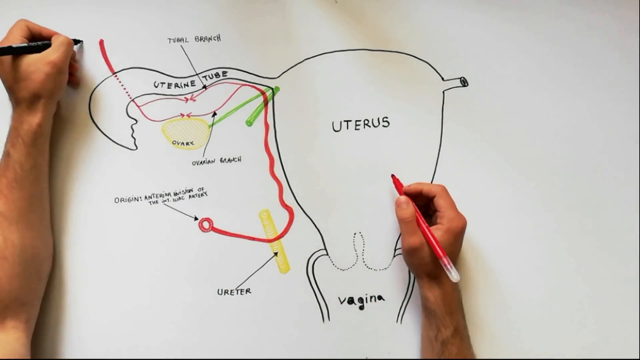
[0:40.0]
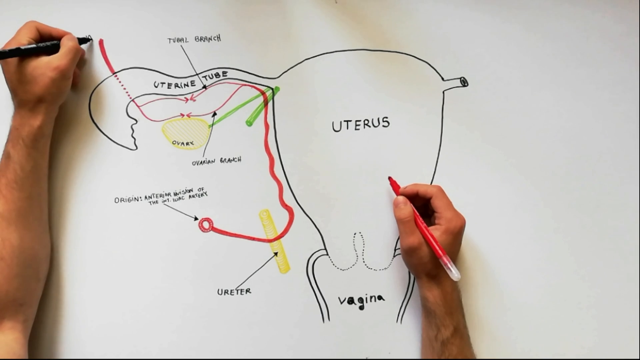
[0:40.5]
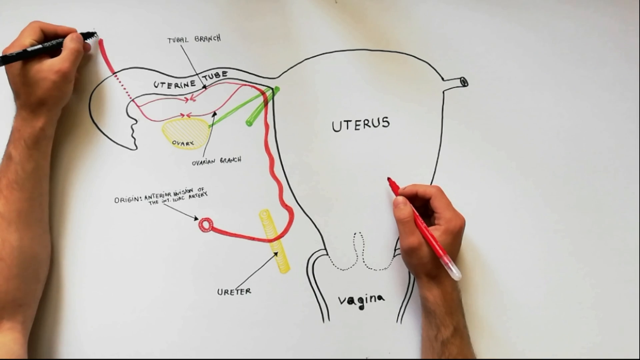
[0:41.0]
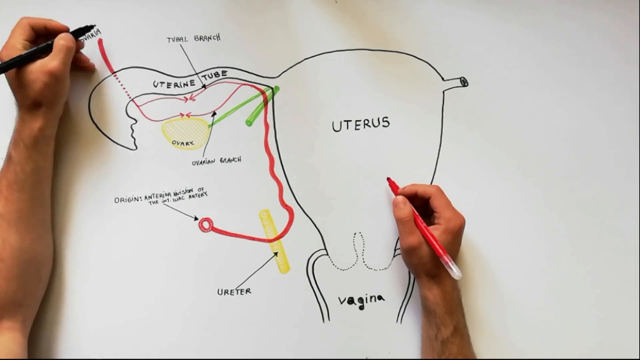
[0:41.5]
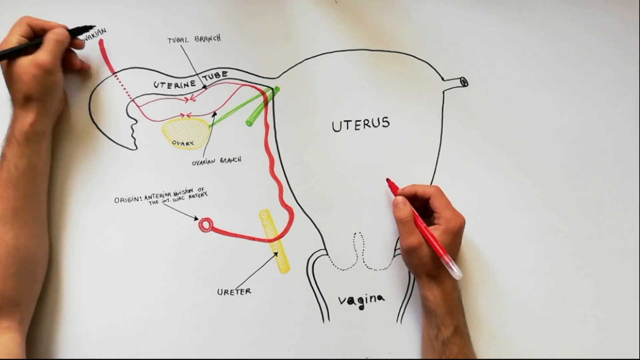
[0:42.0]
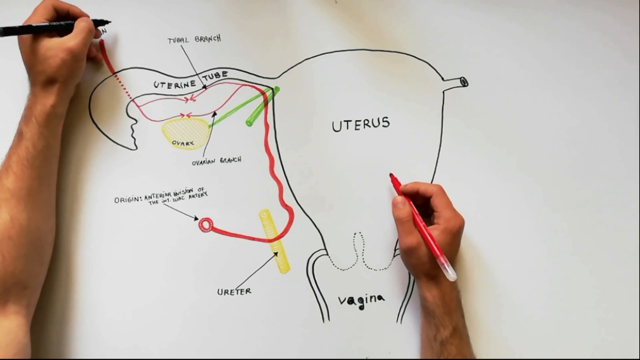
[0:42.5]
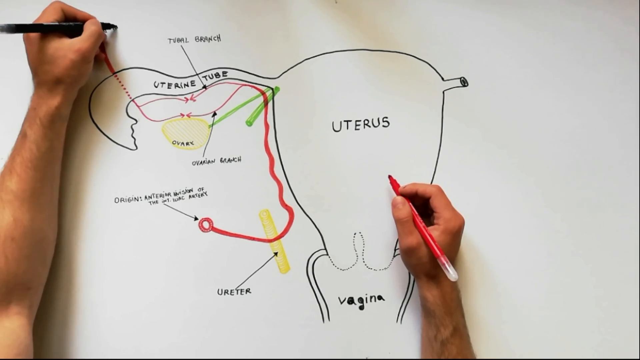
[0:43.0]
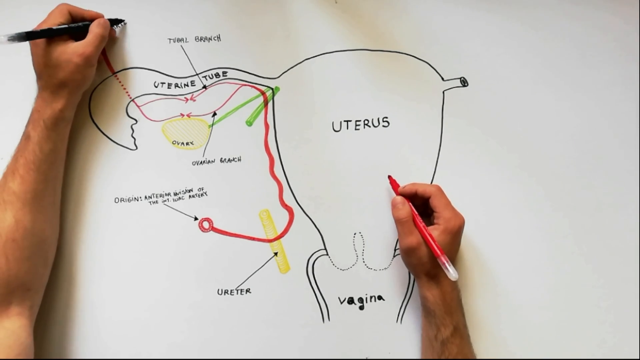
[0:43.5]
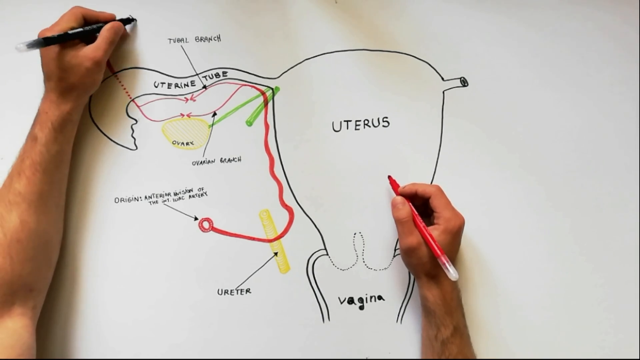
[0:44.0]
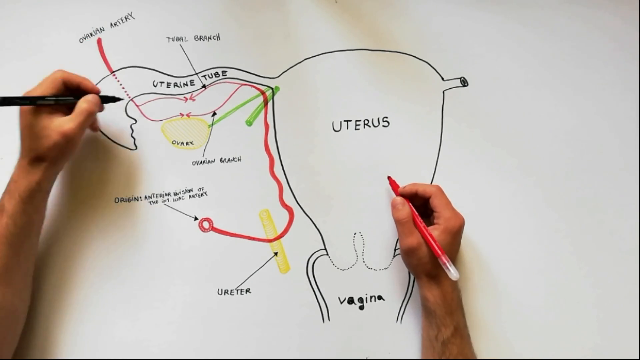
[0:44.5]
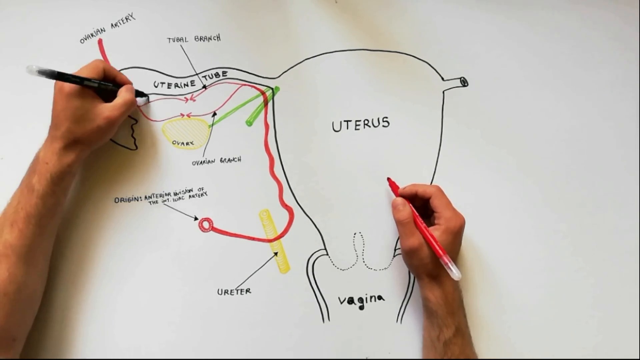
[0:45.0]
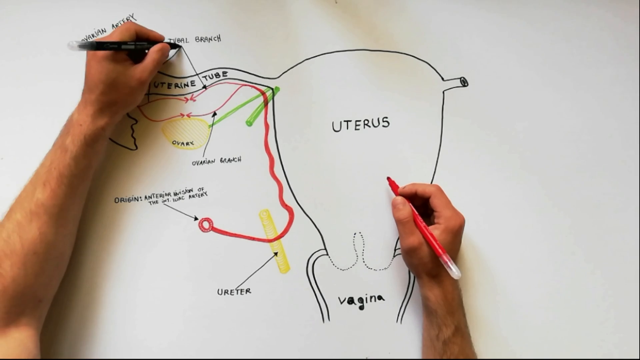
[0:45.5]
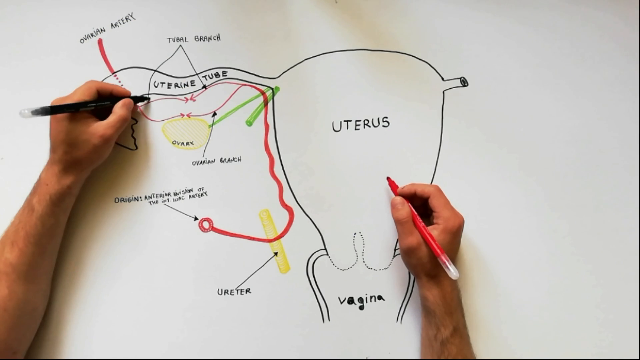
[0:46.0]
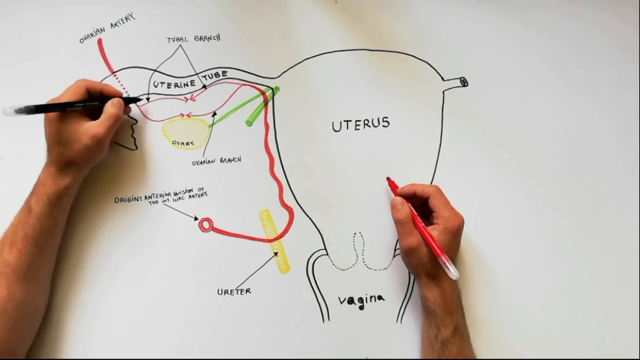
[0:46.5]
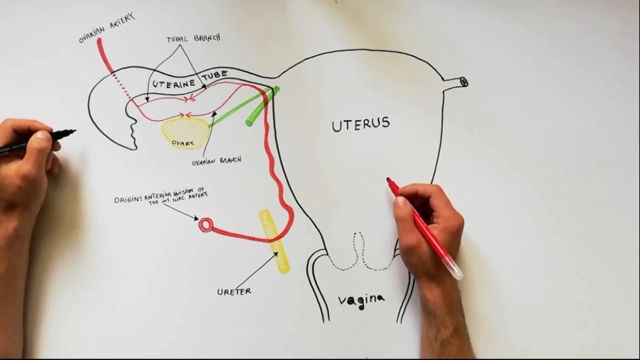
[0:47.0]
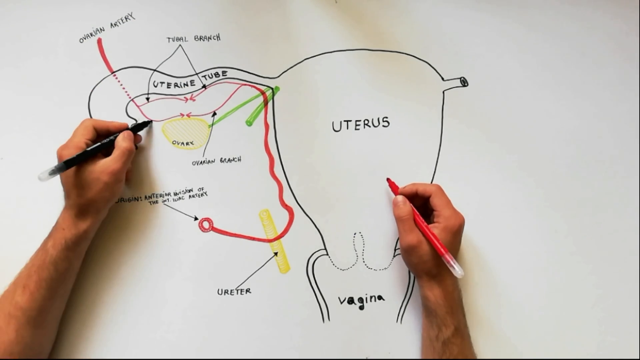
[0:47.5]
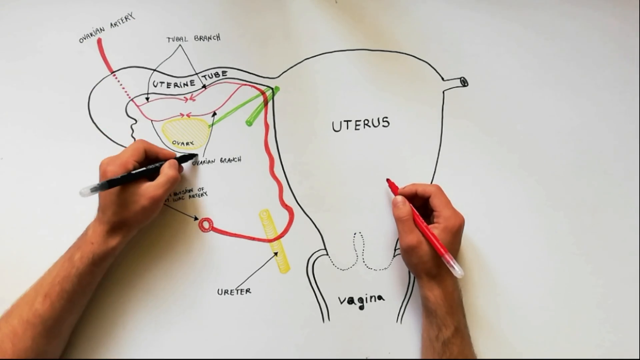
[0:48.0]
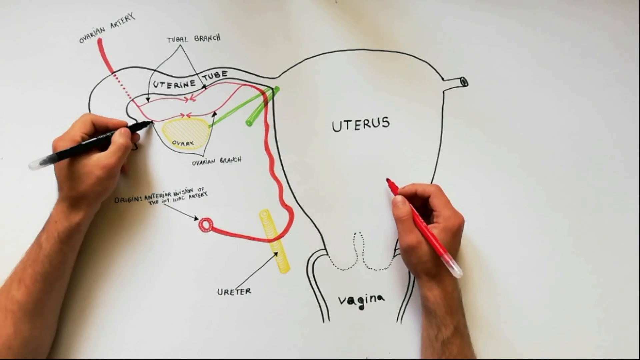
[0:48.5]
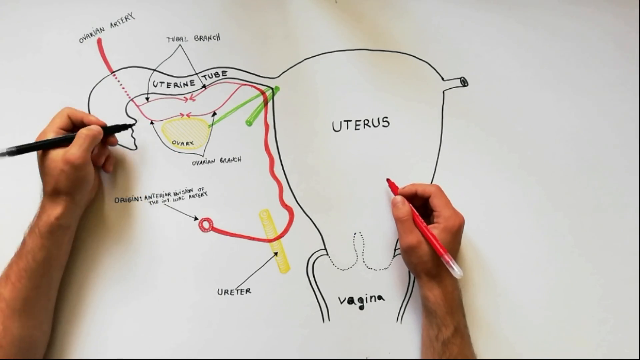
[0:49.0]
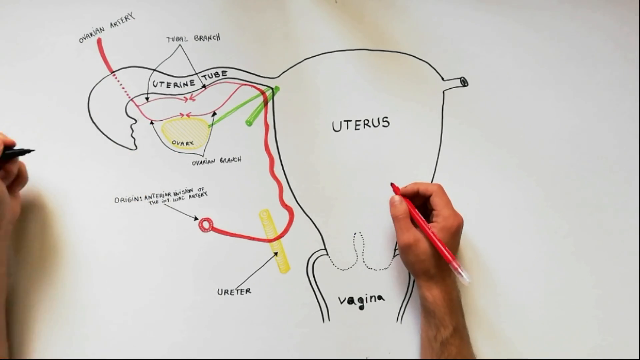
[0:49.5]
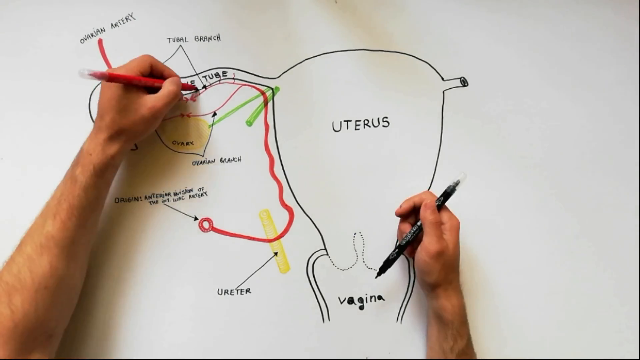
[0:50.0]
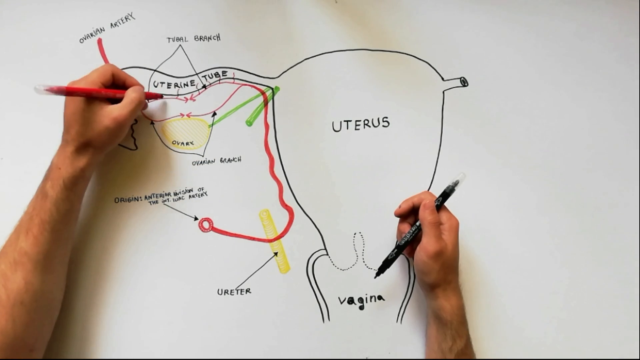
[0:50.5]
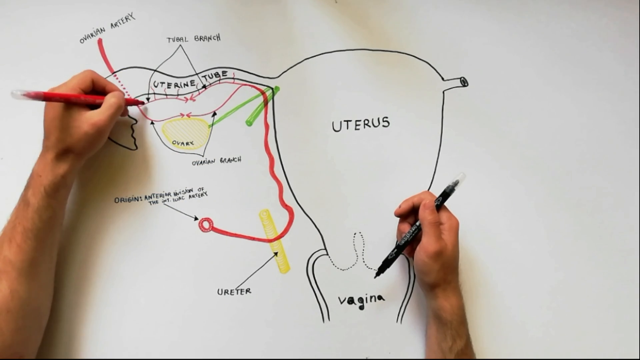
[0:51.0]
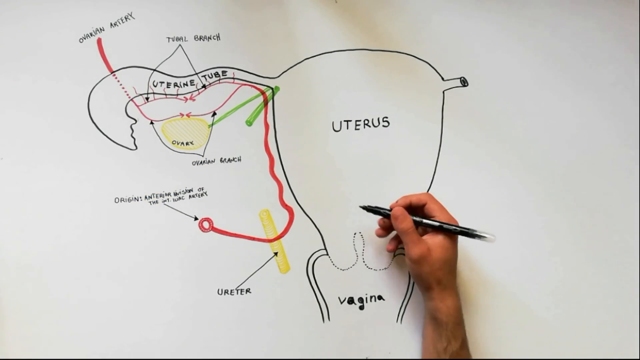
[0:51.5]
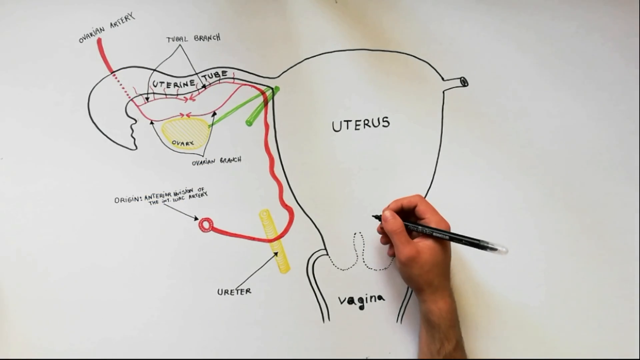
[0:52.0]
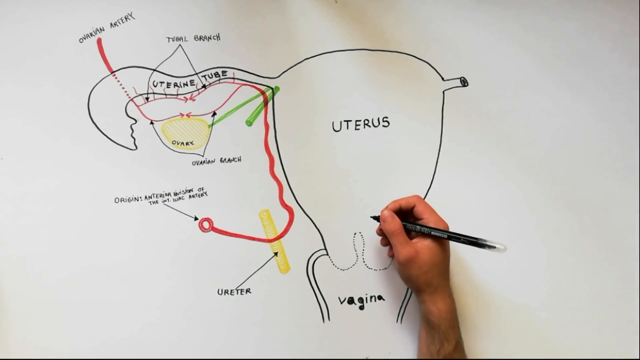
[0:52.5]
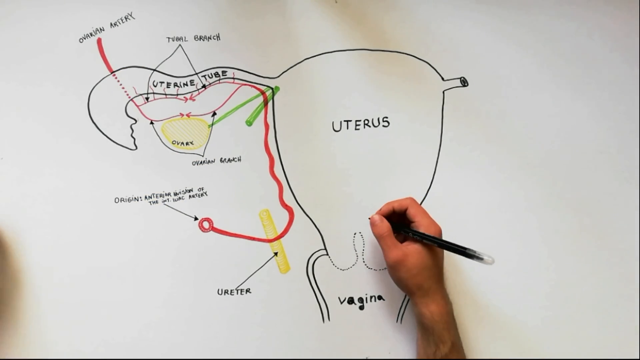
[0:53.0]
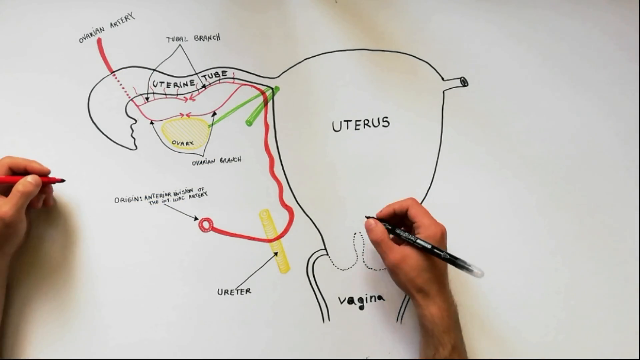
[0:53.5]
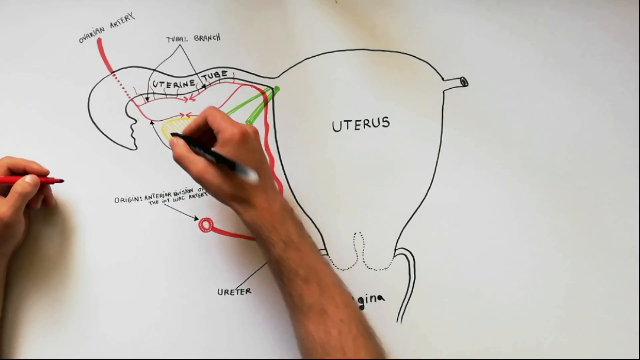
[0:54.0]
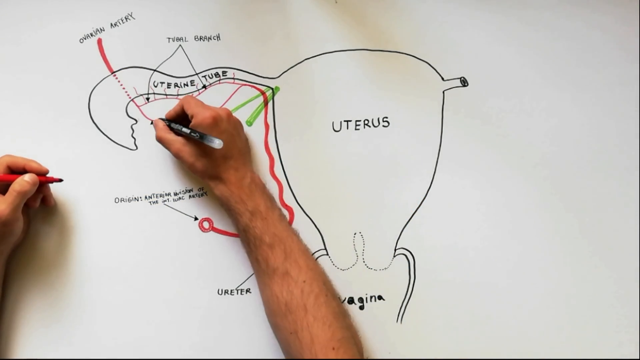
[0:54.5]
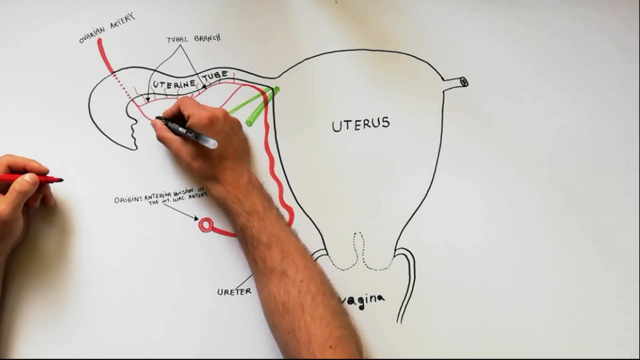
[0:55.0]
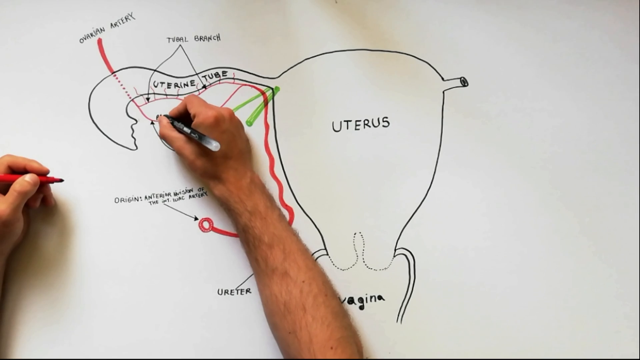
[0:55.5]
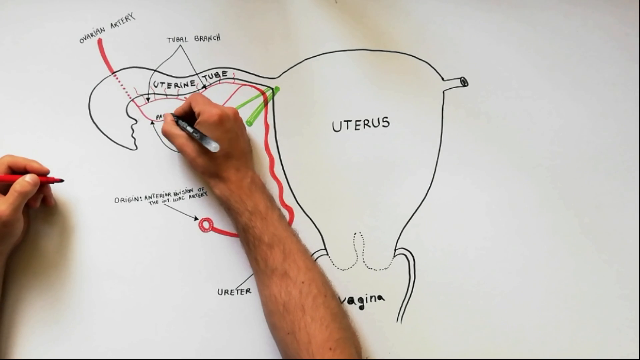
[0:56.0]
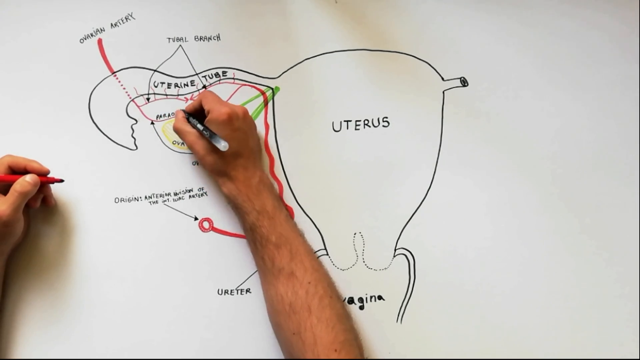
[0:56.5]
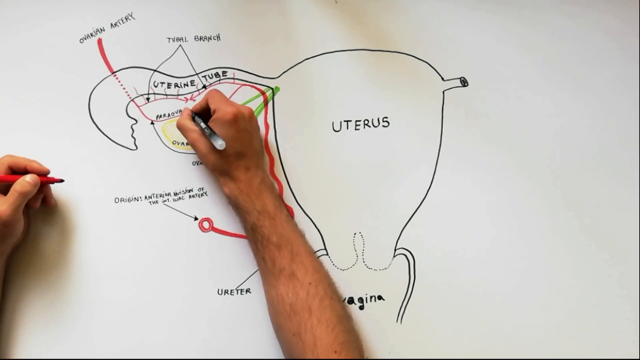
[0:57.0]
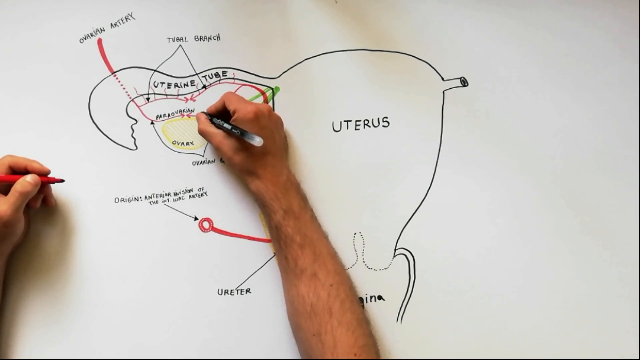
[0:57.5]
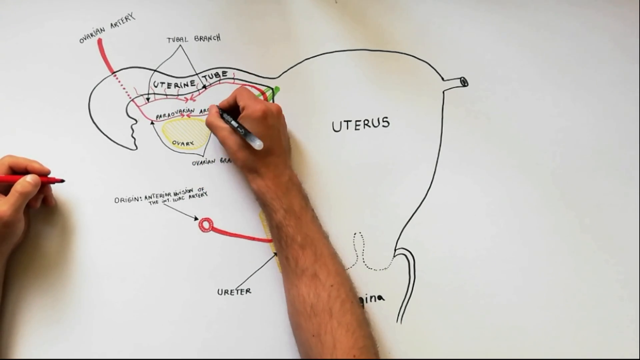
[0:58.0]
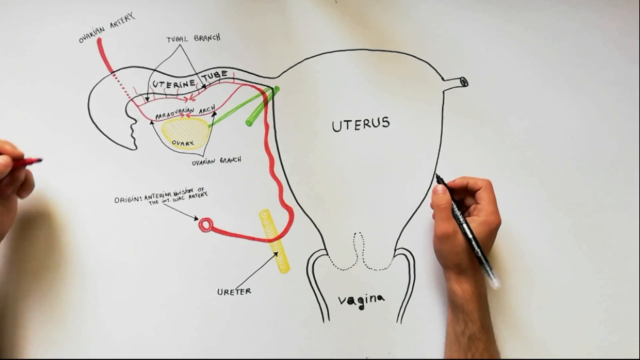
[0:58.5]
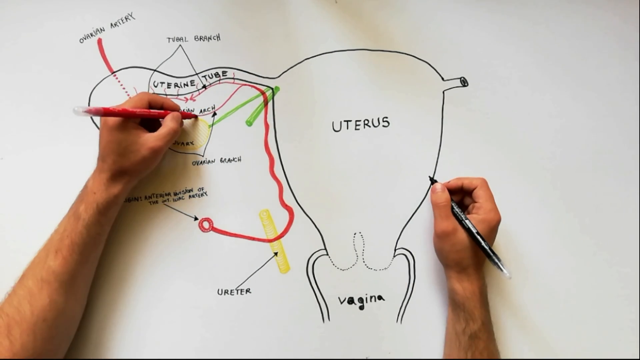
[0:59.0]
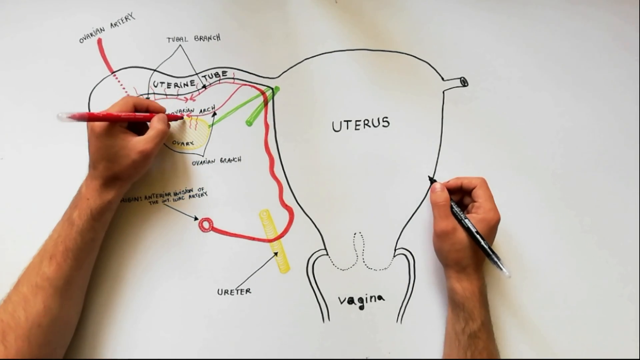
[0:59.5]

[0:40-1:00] A white board has been placed down and is filmed from above, aiming down, with the person's left and right arms over it. His right hand holds a red marker and his left hand holds a black marker. Drawn on the board is an oval shape with the word "uterus" inside it. At the top of the oval, a small tube comes off it with the words "uterine tube" inside. Tubes come off the left and right sides of the bottom of the oval, with the word "vagina" between them. To the left of that is a small yellow tube, out by itself and not connected to anything, with the word "ureter" written in black underneath and a black arrow going from that word to the tube. Underneath the uterine tube is a yellow circle with the word "ovary" written on it.